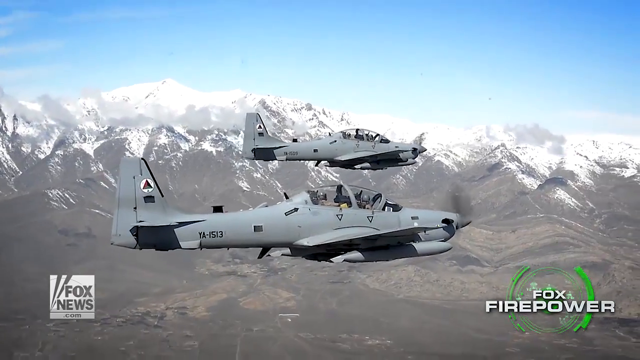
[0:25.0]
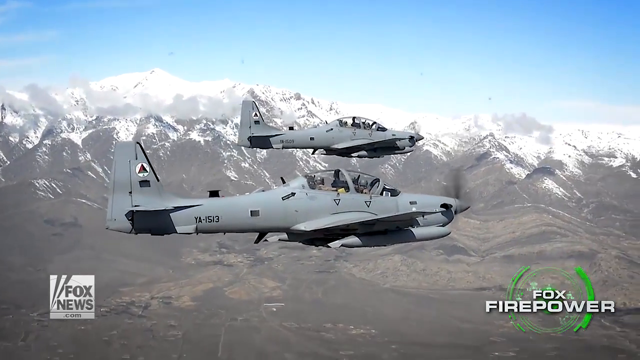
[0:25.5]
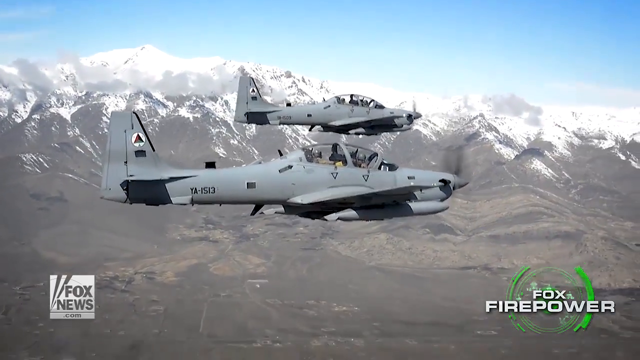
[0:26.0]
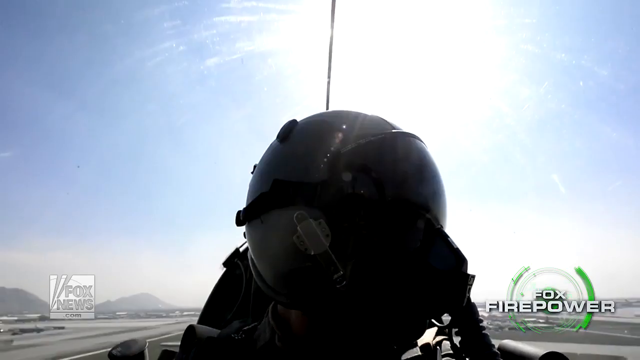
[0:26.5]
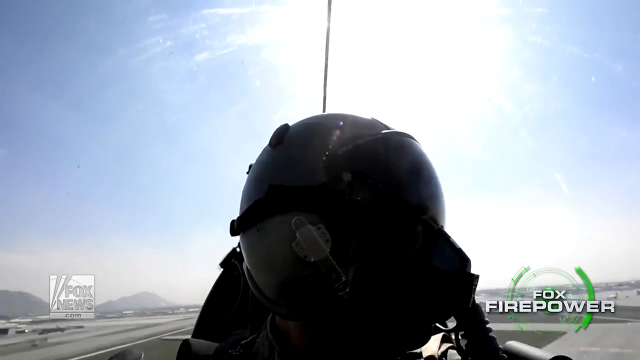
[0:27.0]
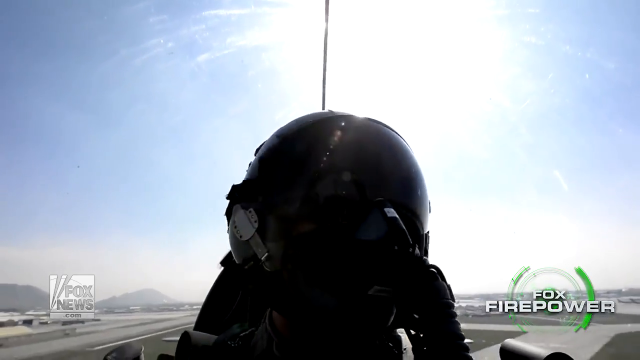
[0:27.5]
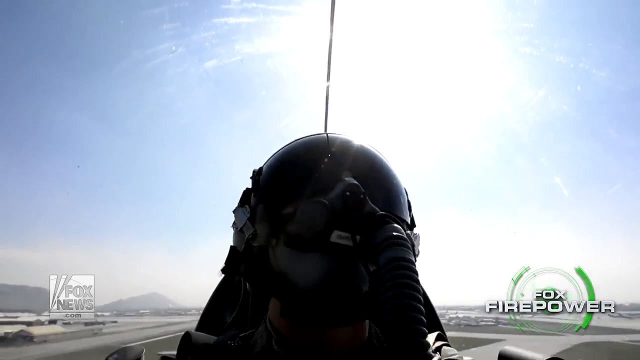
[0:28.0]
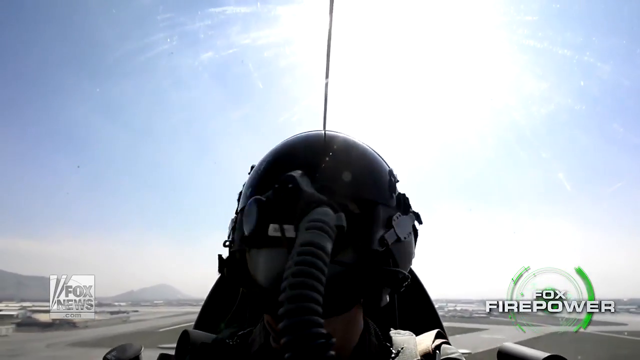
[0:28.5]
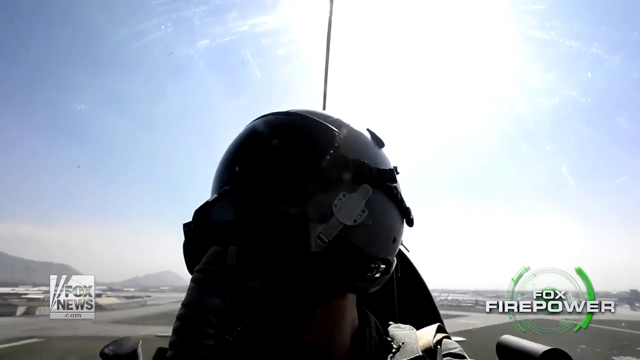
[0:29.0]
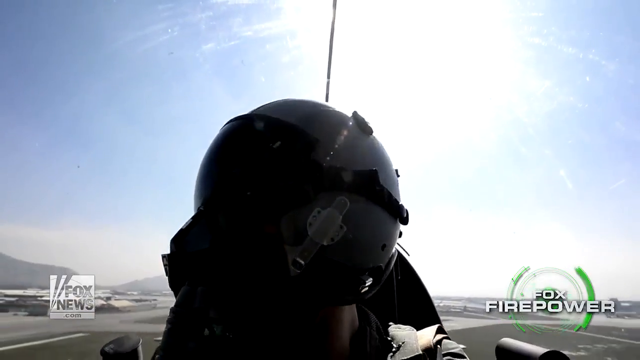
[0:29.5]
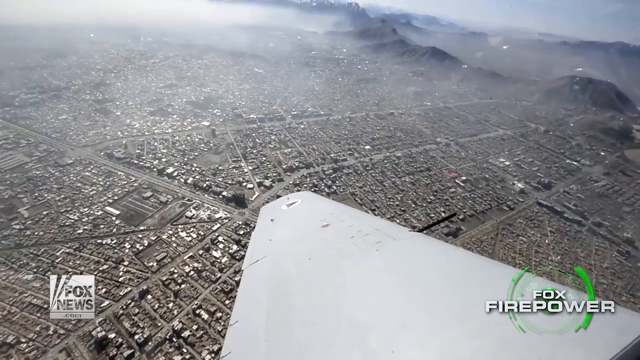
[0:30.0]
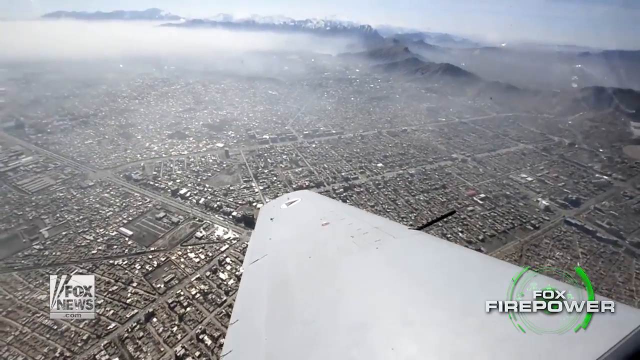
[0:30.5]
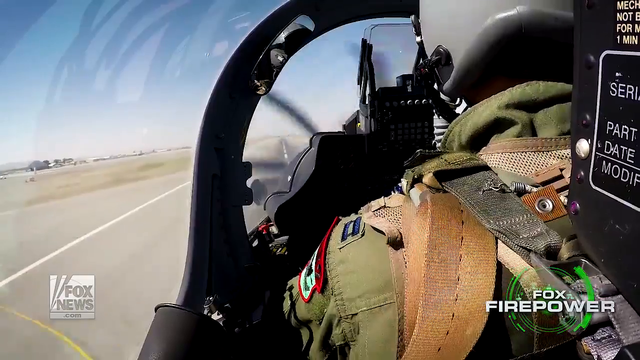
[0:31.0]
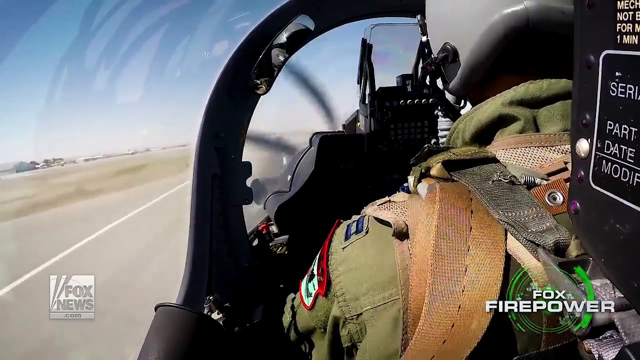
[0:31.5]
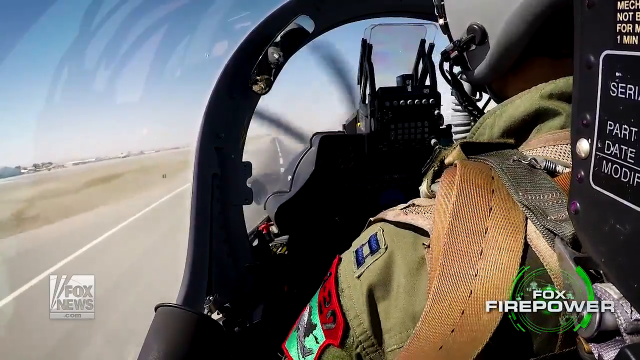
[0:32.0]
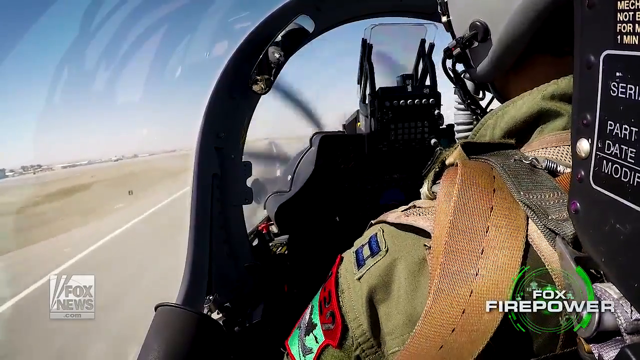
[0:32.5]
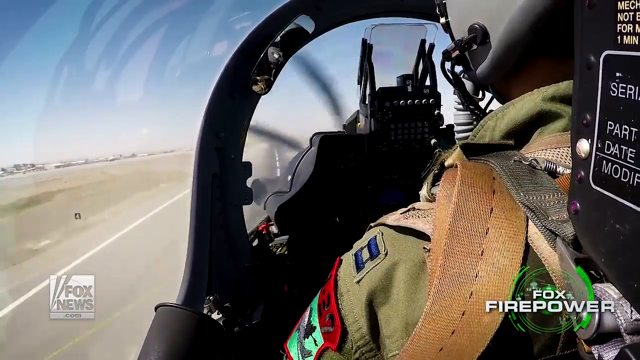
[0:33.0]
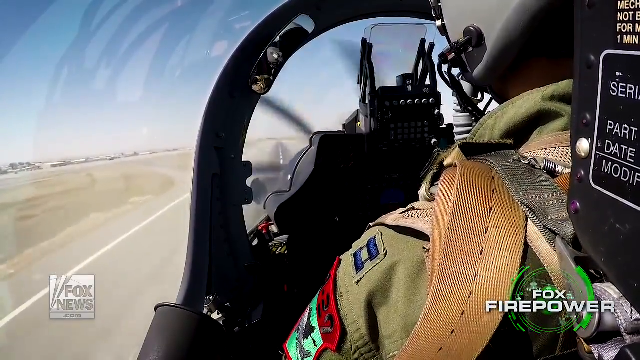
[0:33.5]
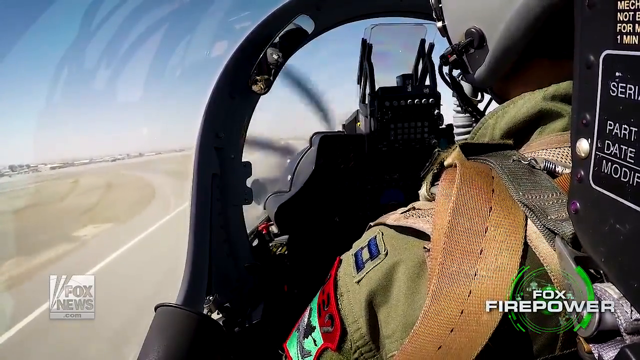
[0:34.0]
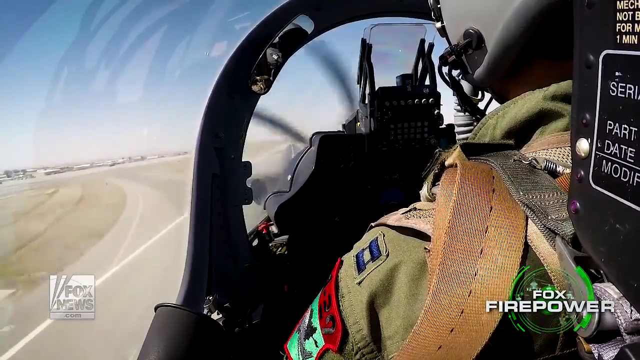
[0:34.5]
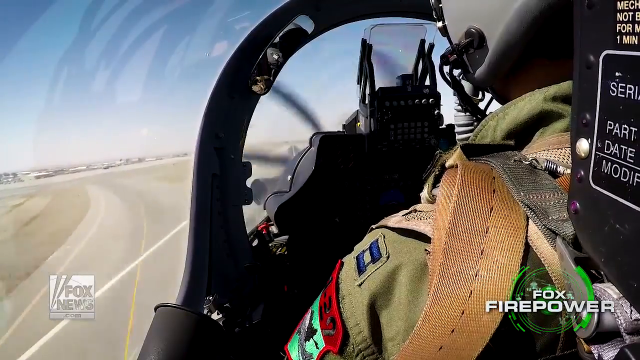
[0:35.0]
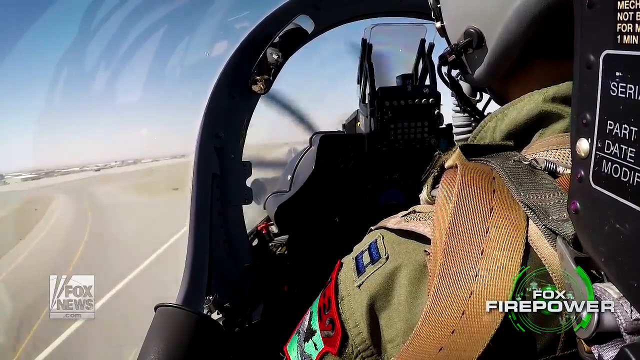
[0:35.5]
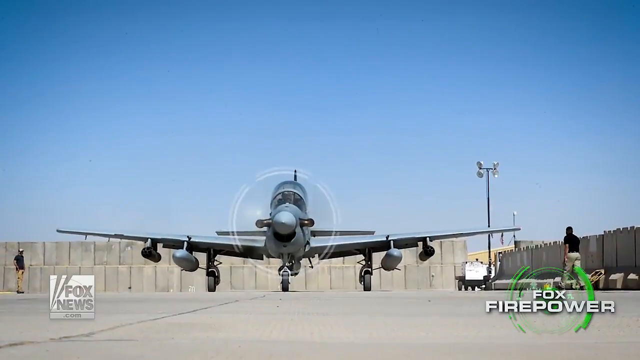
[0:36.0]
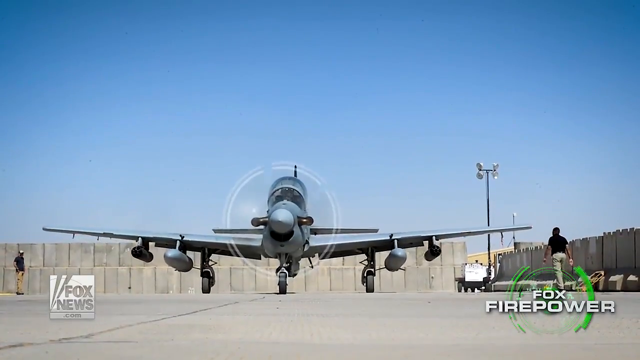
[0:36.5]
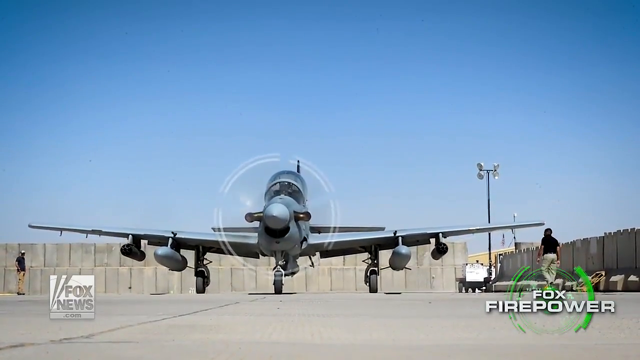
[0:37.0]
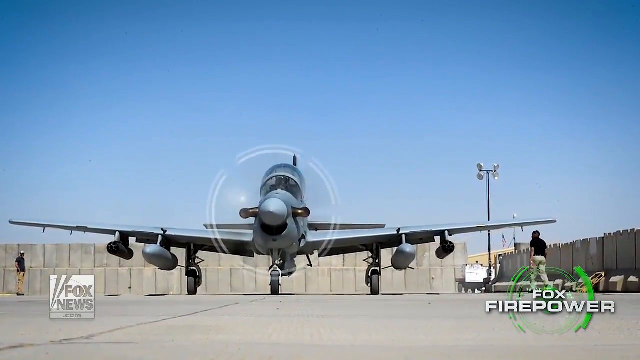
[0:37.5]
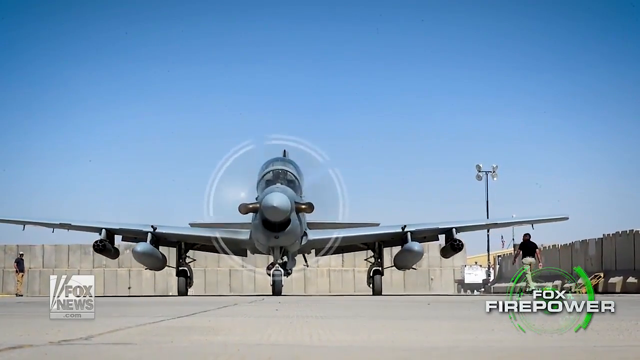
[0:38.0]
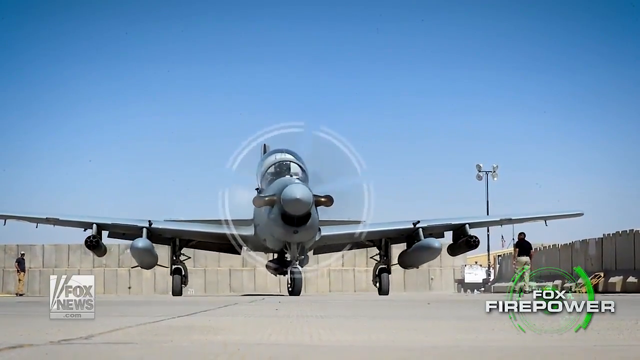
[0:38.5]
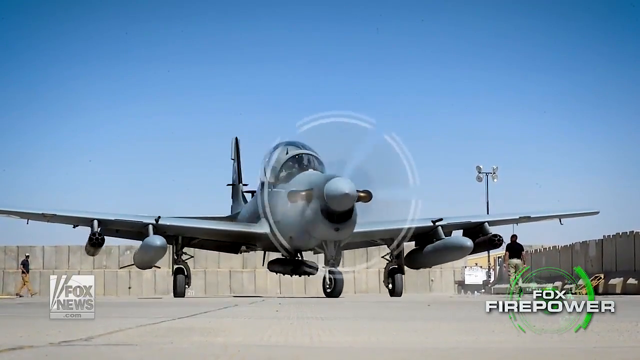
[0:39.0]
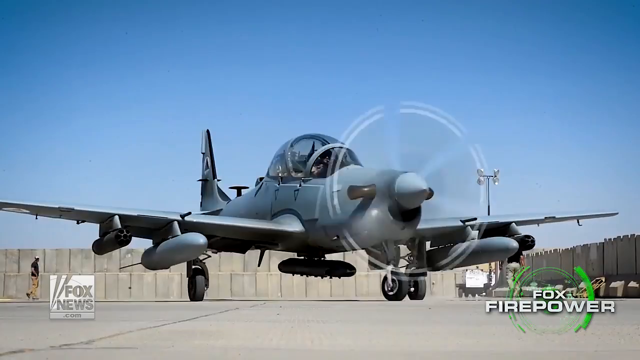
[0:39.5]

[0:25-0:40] Two planes fly in the air with the pilots inside, followed by an aerial view of the plane and the land together. One of the planes lands smoothly and moves toward the right. The people flying the planes wear military uniforms, apparently US Army, and the pilots are fully dressed in their pilot uniforms. Two people walk around the area where the plane lands: a black man in a black t-shirt and colorful pants, and another person in a black t-shirt and brown trousers whose face is not clearly visible. The two planes flying in the air are both white with some black parts, while the one that lands is grey. All the planes look good and well maintained.